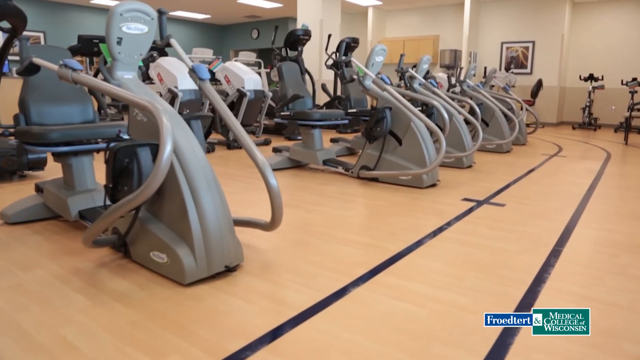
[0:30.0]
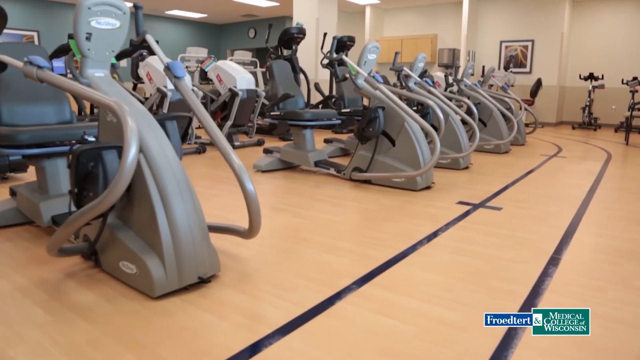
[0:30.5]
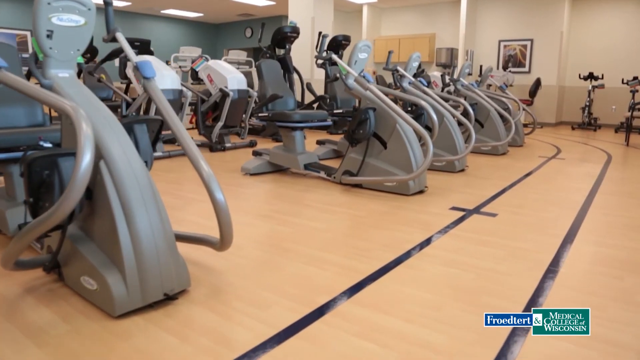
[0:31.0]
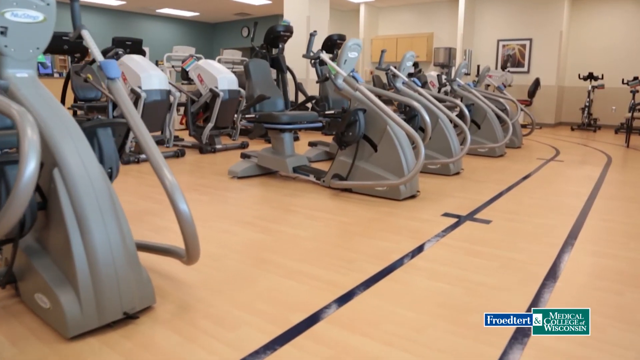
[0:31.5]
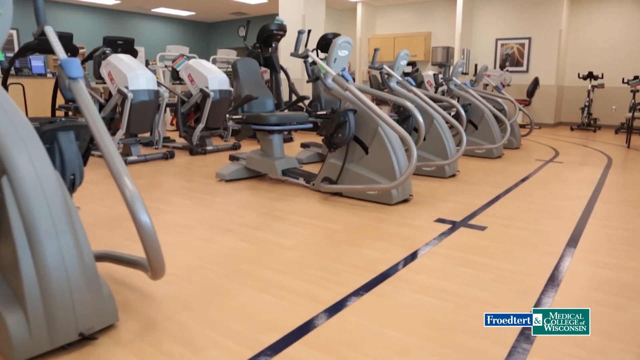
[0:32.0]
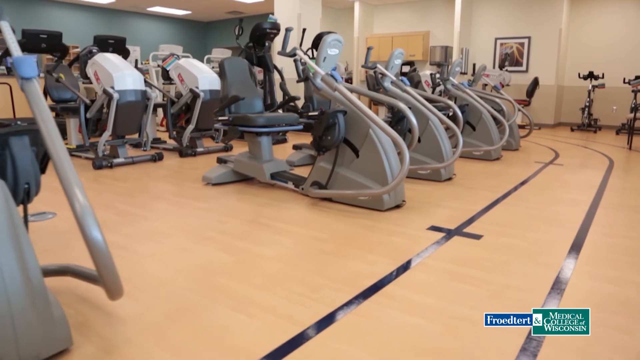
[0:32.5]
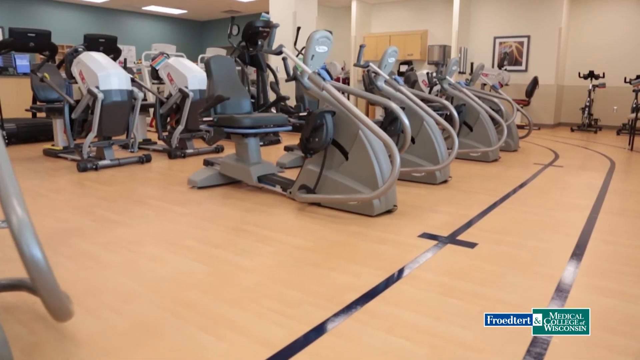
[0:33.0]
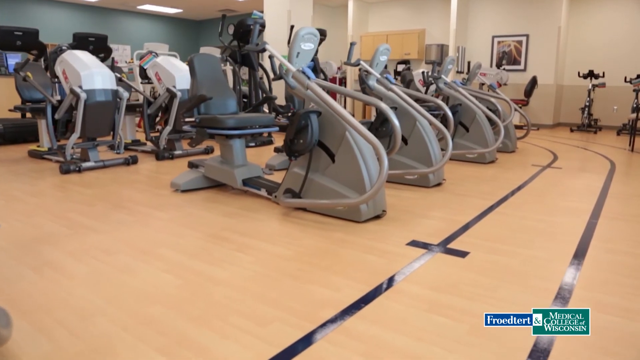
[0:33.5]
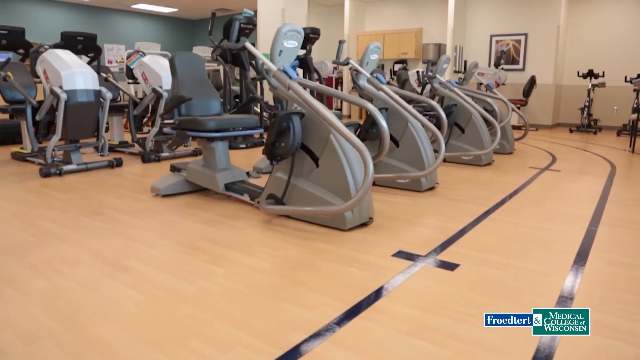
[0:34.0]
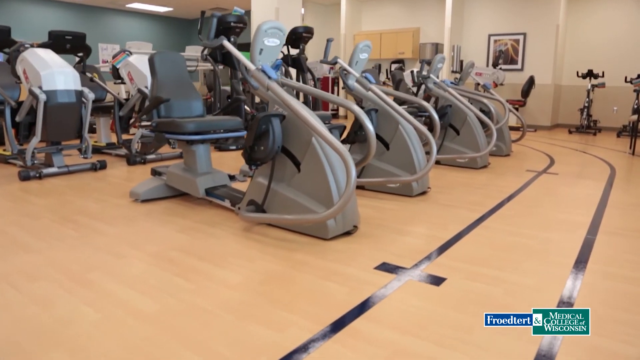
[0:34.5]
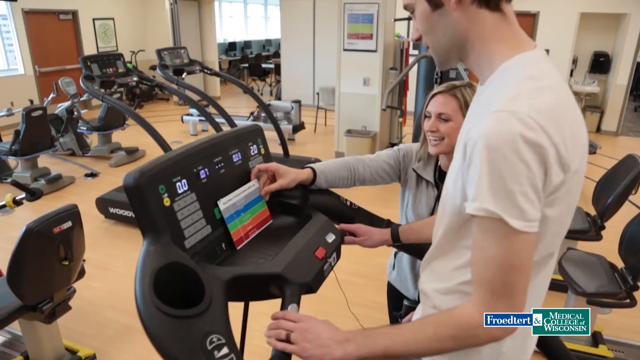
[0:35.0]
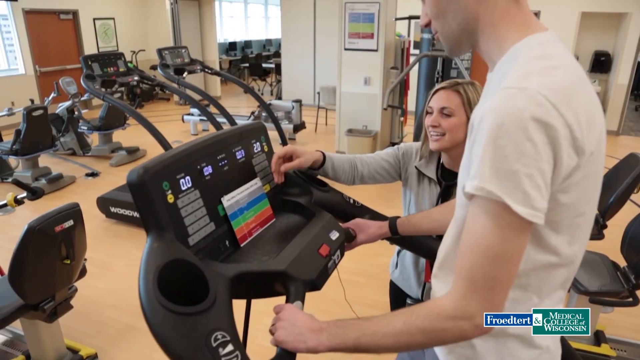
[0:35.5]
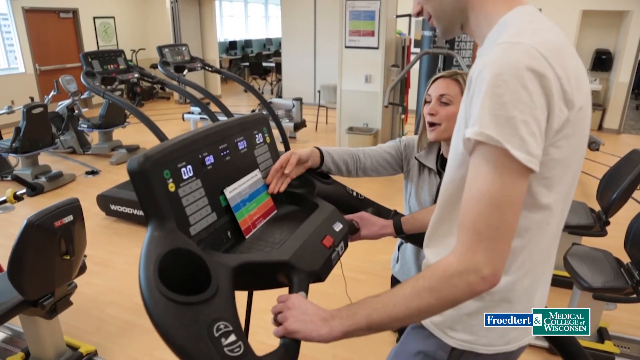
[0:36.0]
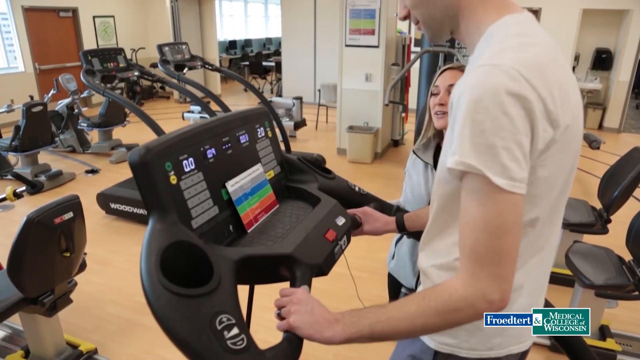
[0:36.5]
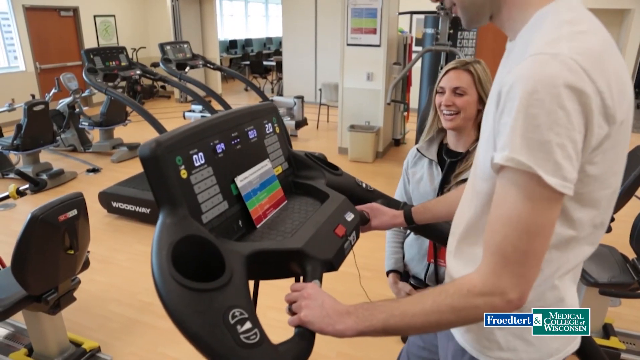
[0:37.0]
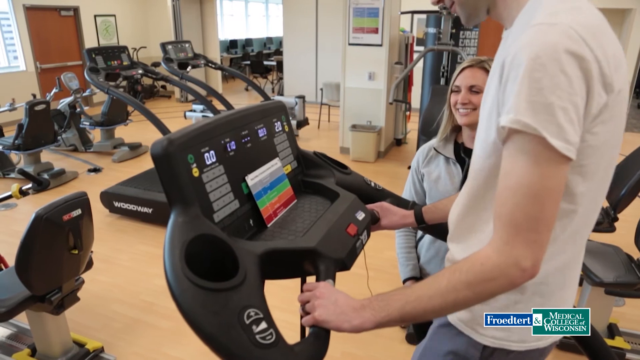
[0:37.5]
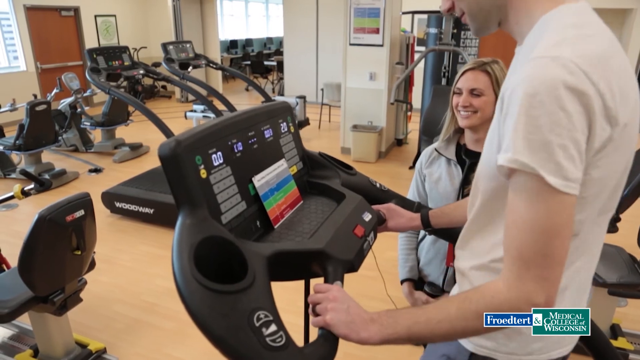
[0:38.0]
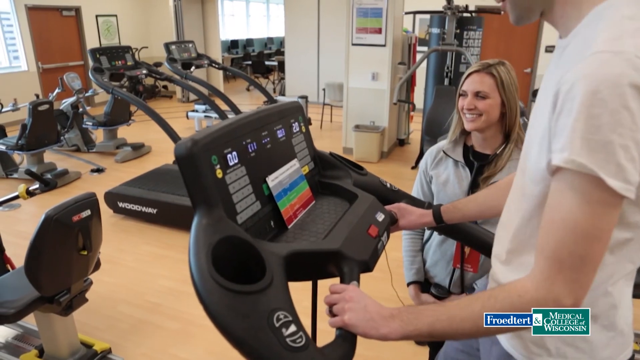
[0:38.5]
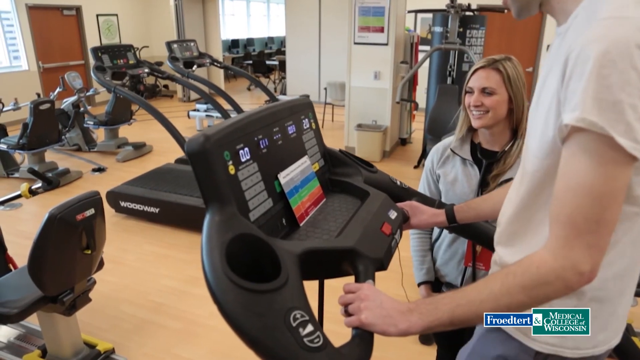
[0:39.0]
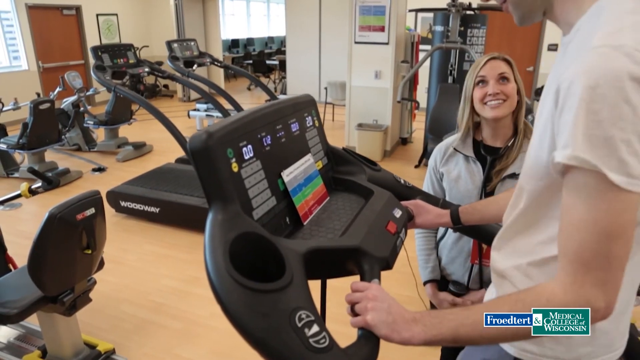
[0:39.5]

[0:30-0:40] The camera pans around the exercise room, where there appears to be a small walking track around the outside of the machines, possibly used for running or other exercise. A man in a white shirt sits on the seat of what appears to be an elliptical bike with his hands on the bars, looking at the machine. A blonde-haired woman to his right appears to be showing him how the screen works, and she smiles once she shows him what needs to be done. The man then starts riding the elliptical bike, and the video shows the track around the elliptical bikes.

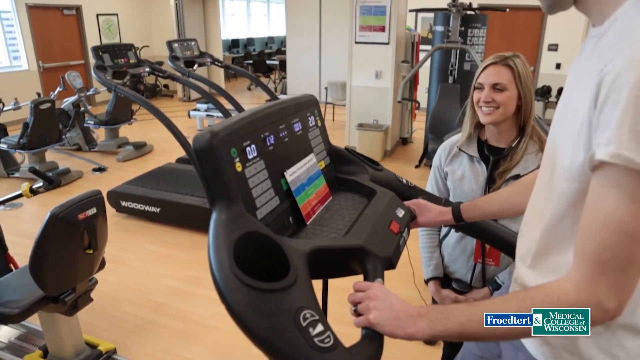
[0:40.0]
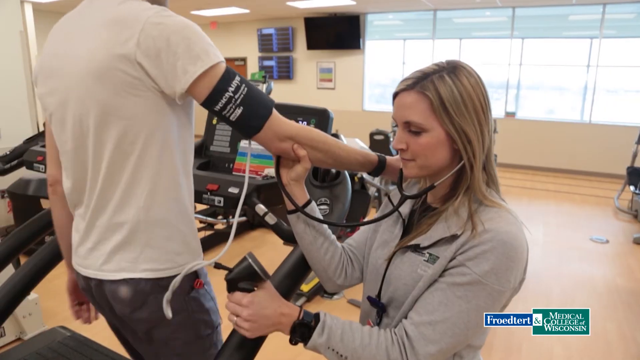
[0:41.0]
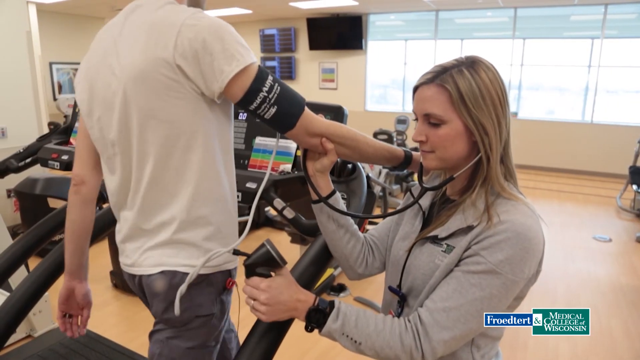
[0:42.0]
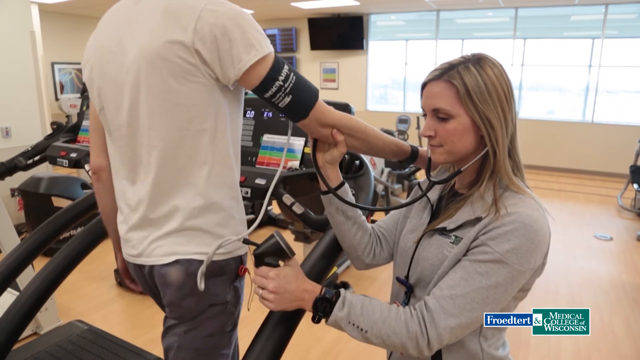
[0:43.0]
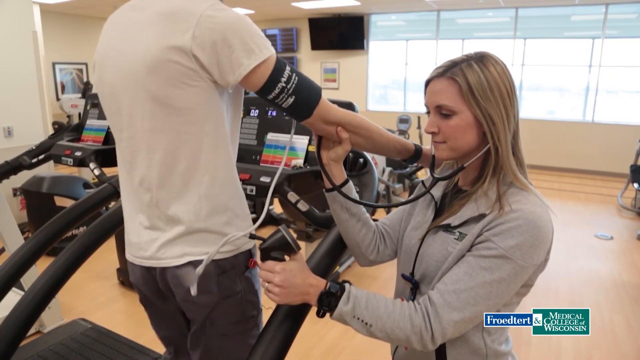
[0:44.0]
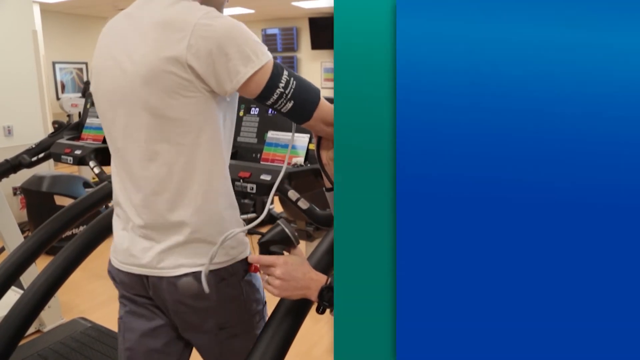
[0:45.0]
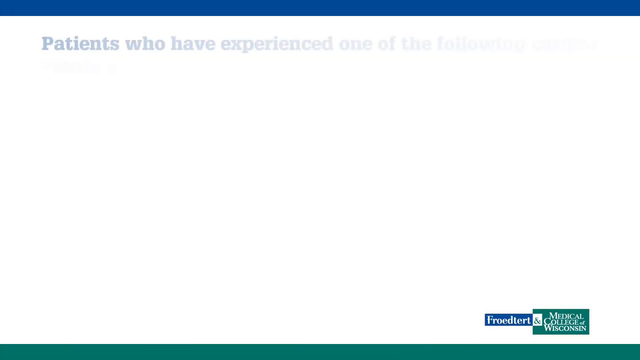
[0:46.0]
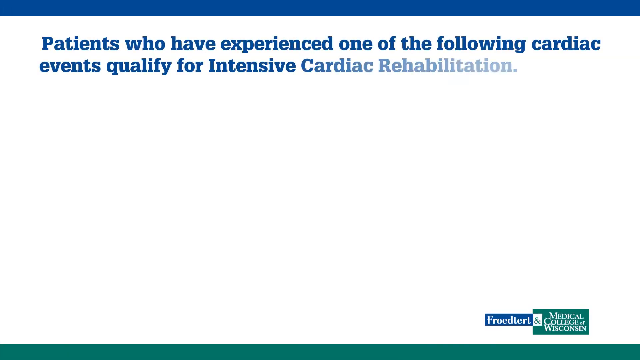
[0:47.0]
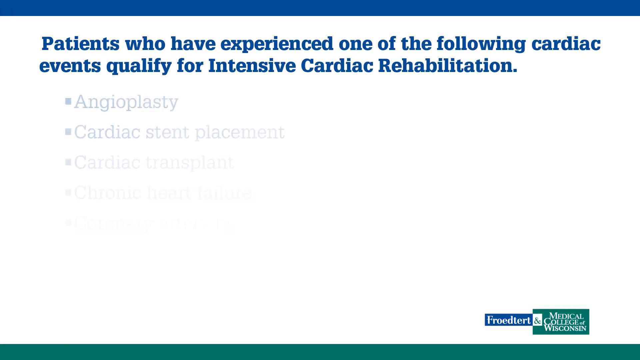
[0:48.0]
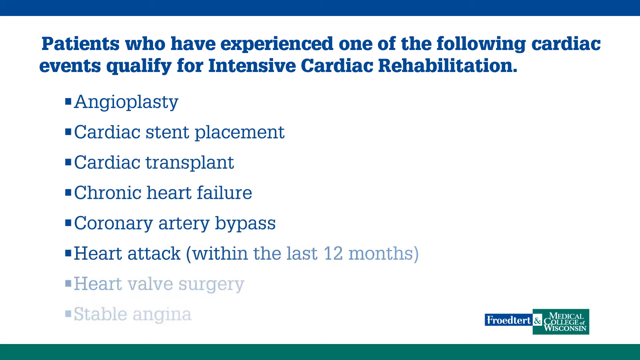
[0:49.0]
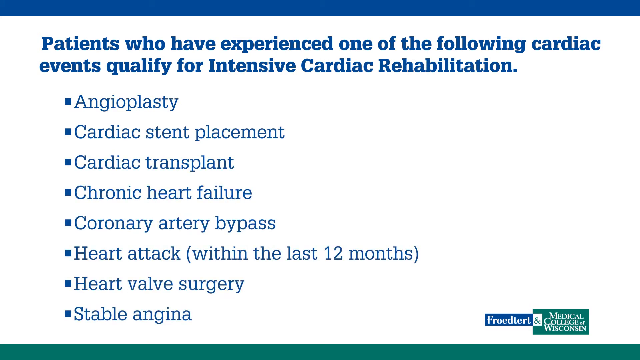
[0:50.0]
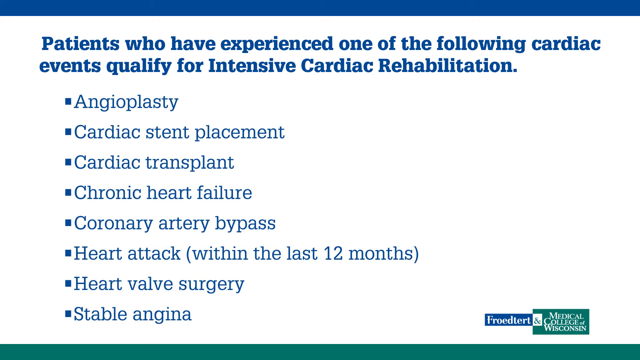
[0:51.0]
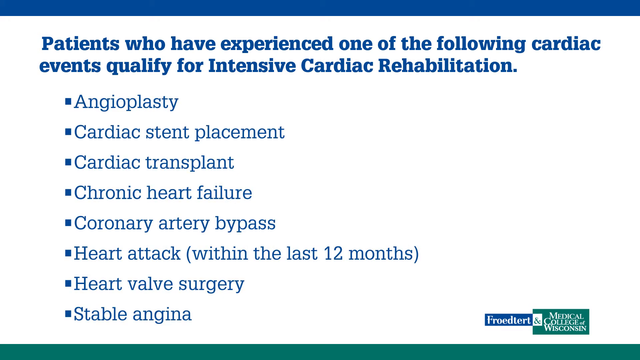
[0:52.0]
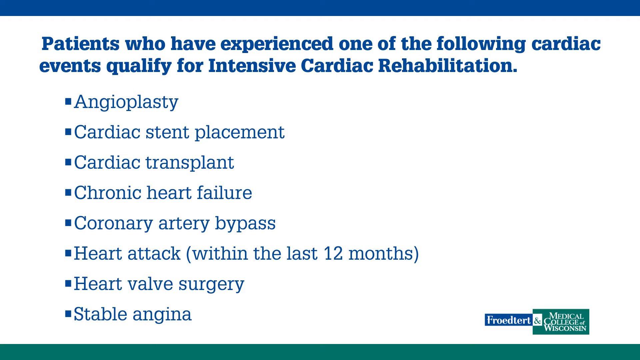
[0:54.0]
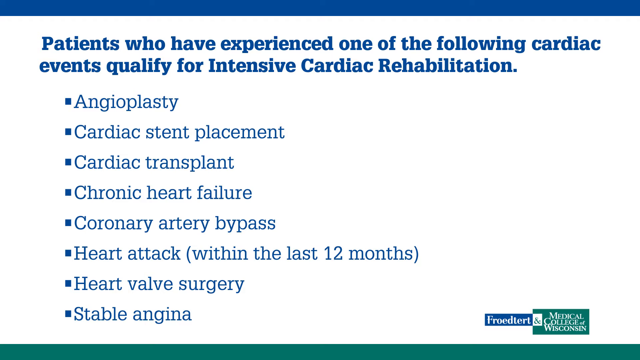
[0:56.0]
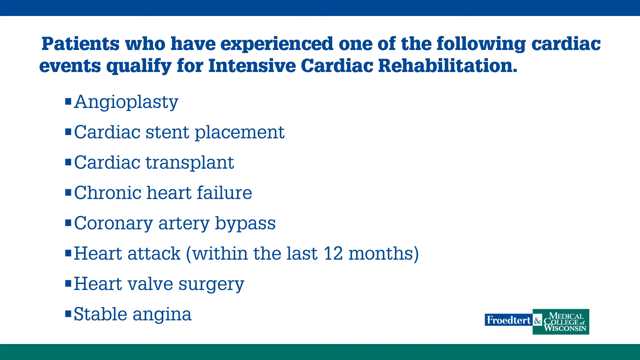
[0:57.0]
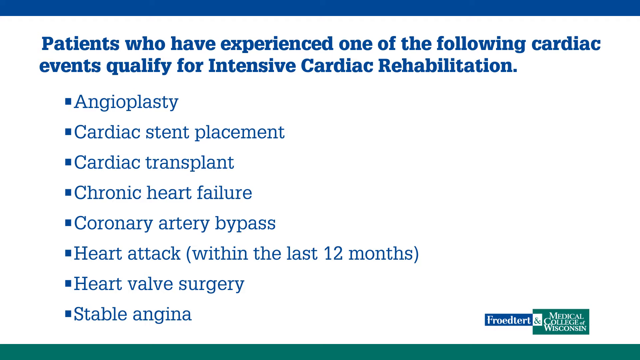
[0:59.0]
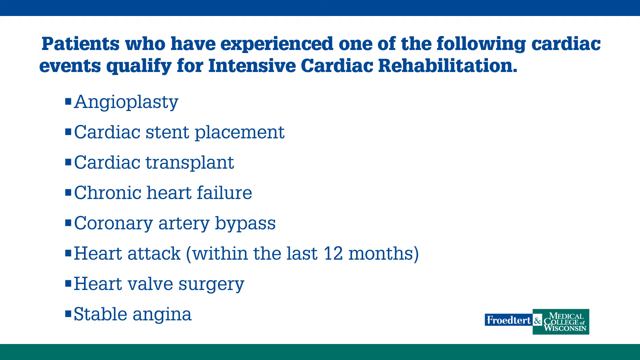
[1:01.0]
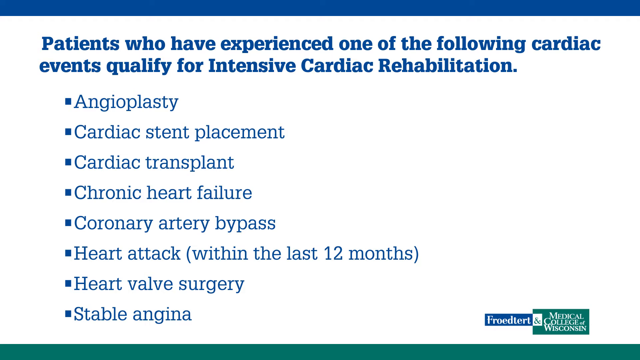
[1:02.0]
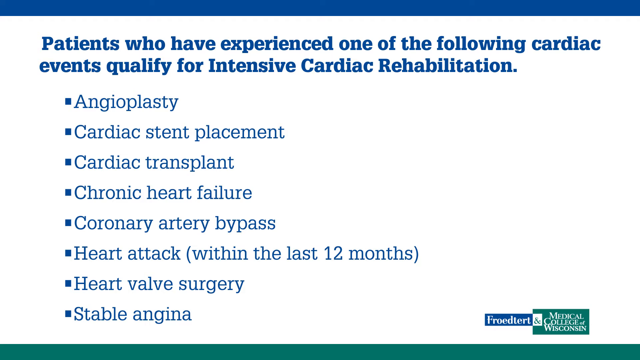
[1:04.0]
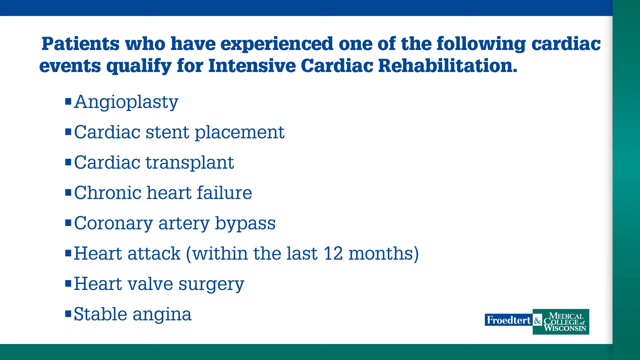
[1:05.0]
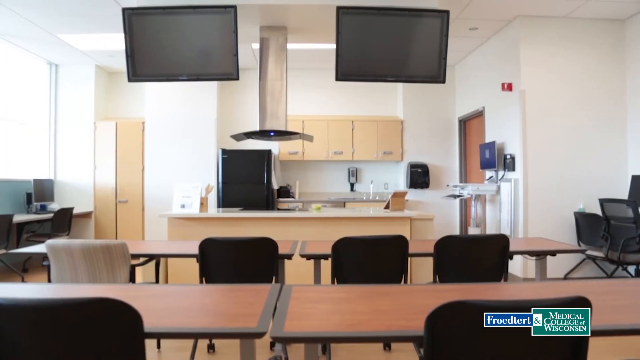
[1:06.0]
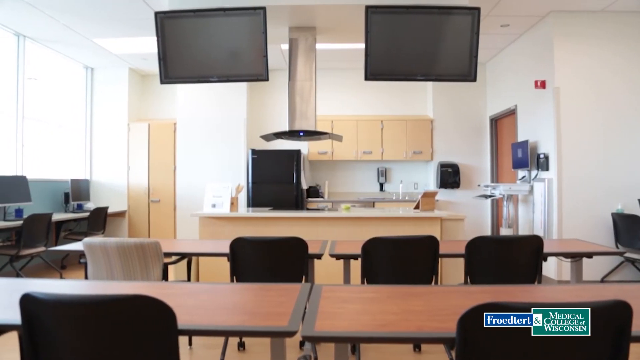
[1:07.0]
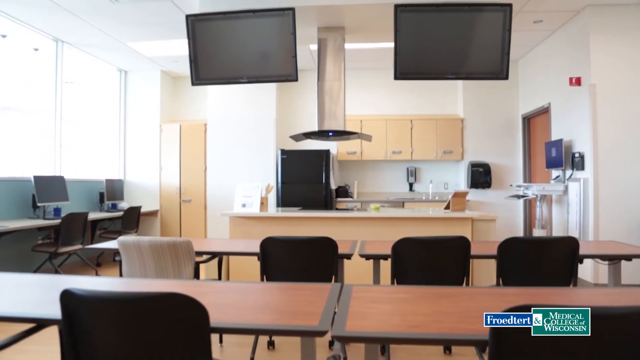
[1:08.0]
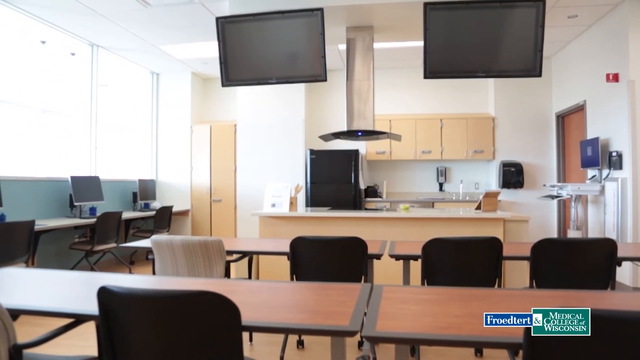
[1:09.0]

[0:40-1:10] The man who was on the elliptical bike is now getting his blood pressure checked. He wears a white t-shirt and what appear to be thin dark exercise pants, and holds his arm out. The blonde-haired woman, with a stethoscope and in what appears to be athletic wear, kneels down below him, taking his blood pressure. Exercise equipment, medical equipment, televisions, and windows are visible in the background.